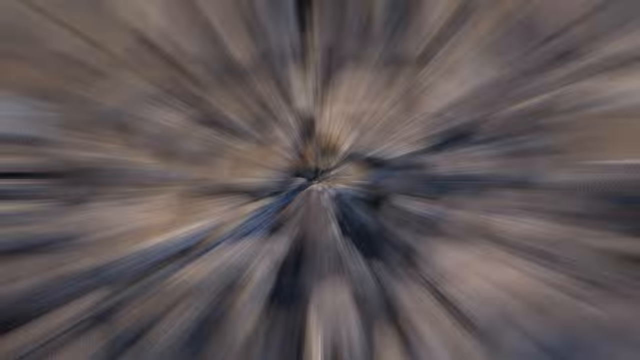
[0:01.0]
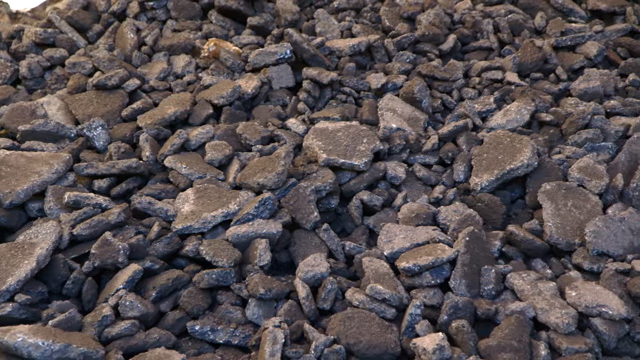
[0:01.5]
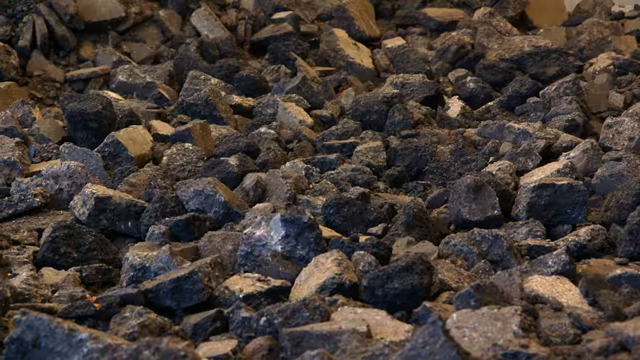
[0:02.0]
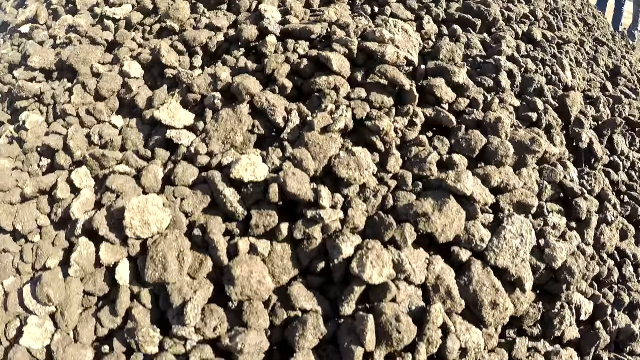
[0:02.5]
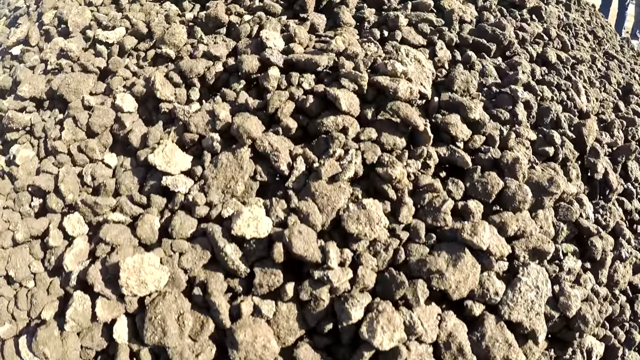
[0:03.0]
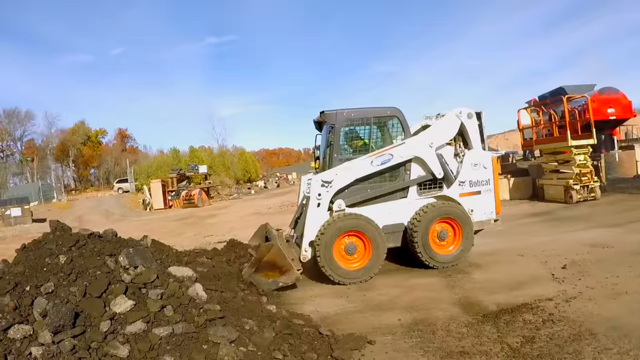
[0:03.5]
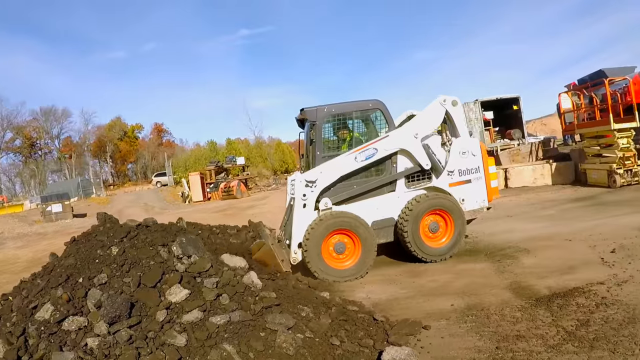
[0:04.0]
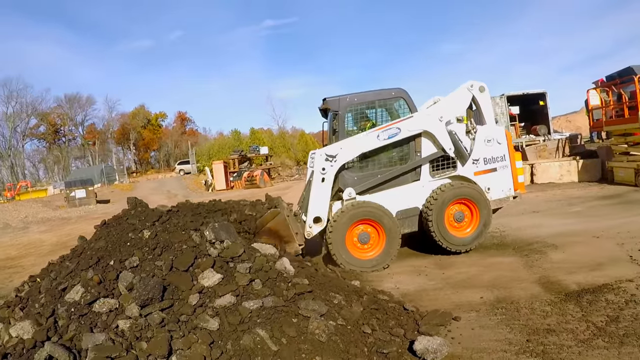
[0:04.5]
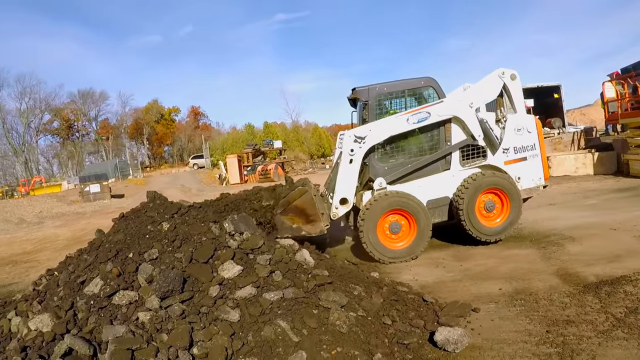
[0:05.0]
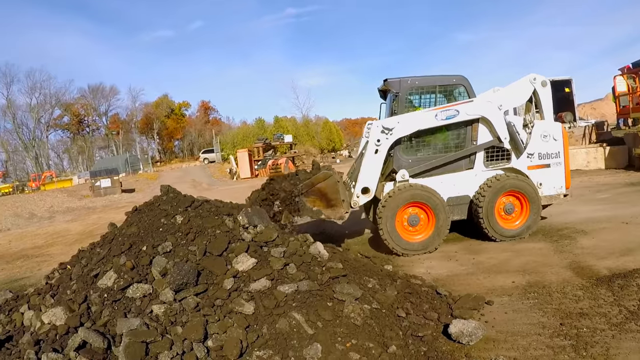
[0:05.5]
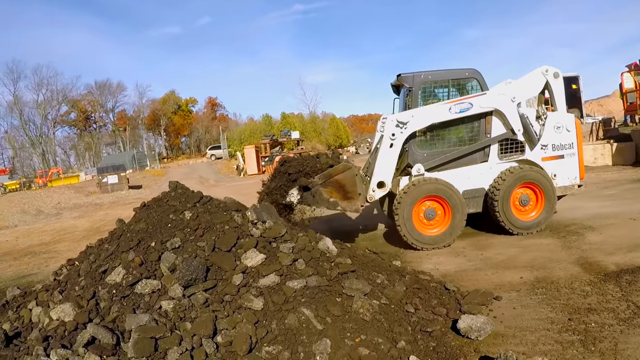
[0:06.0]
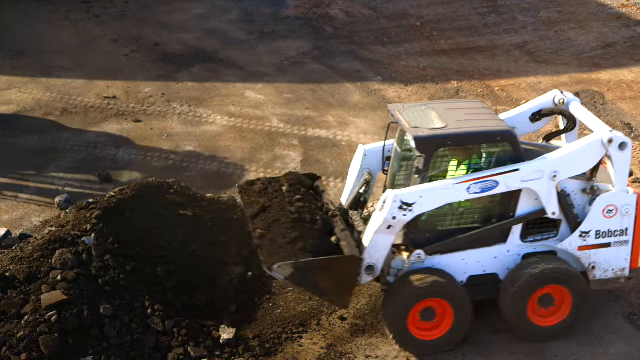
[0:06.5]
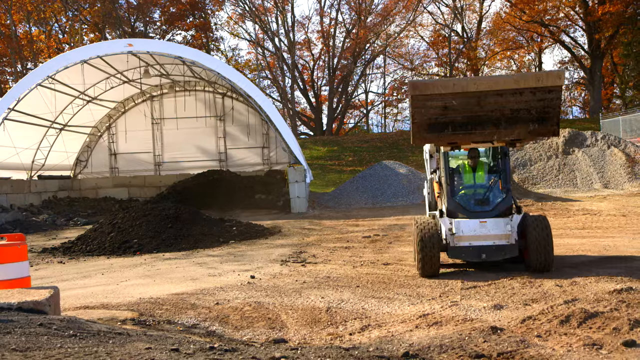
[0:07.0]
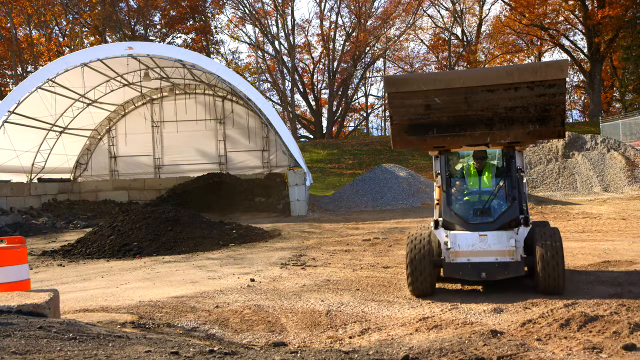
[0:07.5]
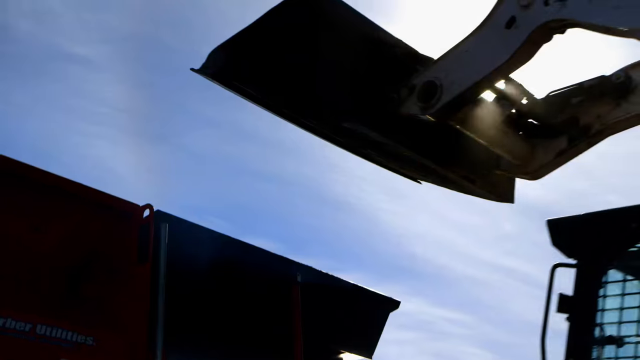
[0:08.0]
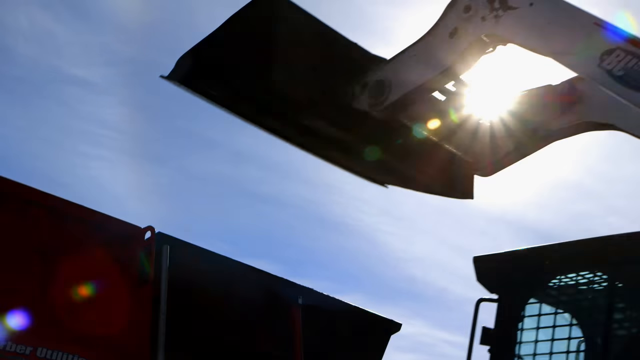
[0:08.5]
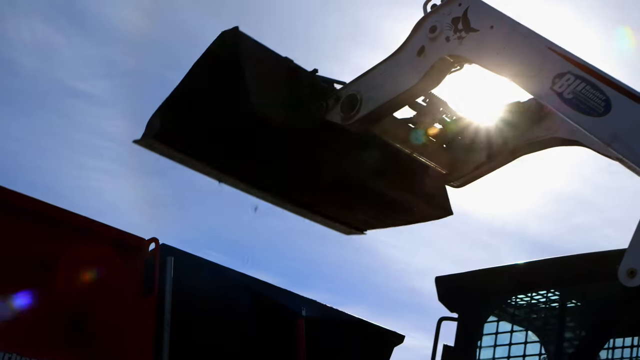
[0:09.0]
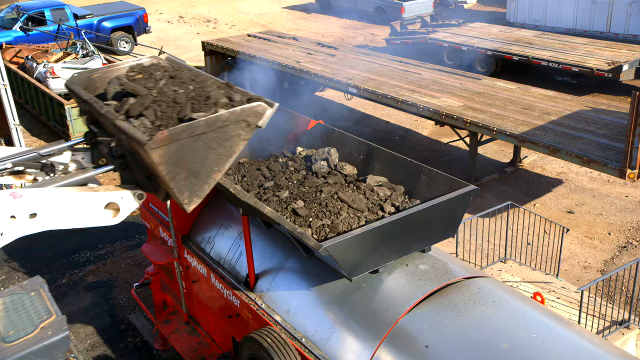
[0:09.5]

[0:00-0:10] Different piles of rocks and soil fill a construction area, and forklift vehicles with a large digger tray dig up the piles of rocks and place them inside a large skip. The driver inside the forklift wears a high-visibility vest. The forklift is white with a black cabin, big black wheels and orange metal plates. In the background are some deciduous trees and a few parked cars. The digger trucks appear to load large amounts of rubble or rocks in the front shovel and then lift up high to a big skip.